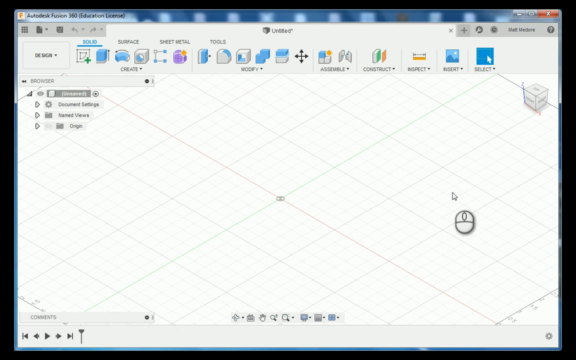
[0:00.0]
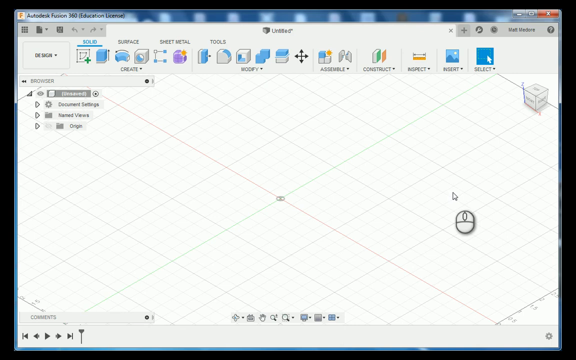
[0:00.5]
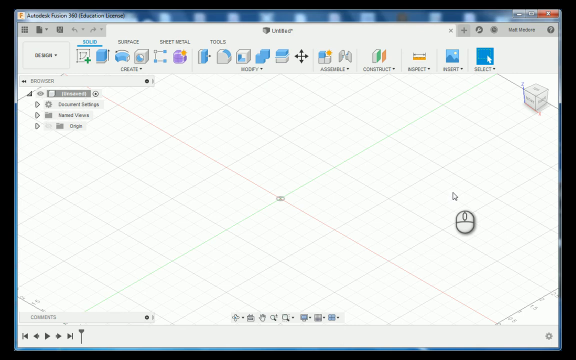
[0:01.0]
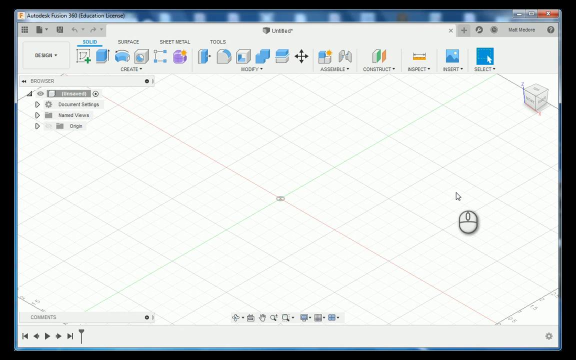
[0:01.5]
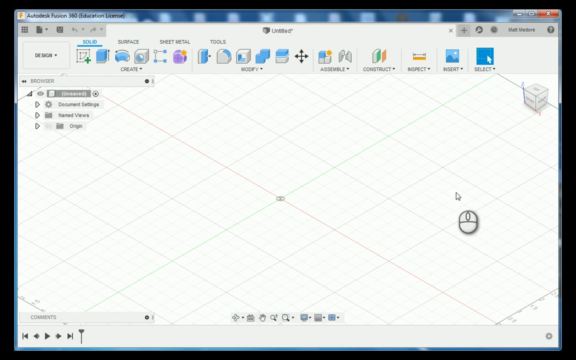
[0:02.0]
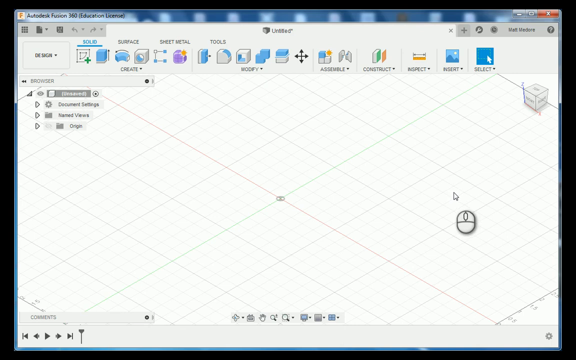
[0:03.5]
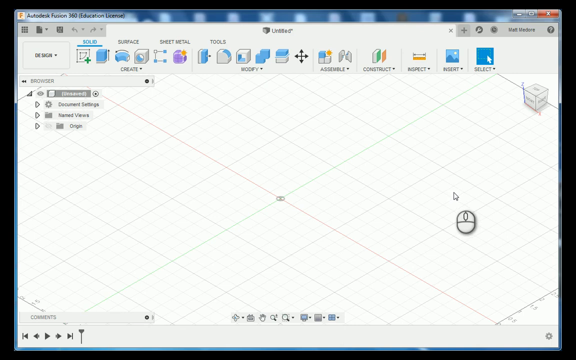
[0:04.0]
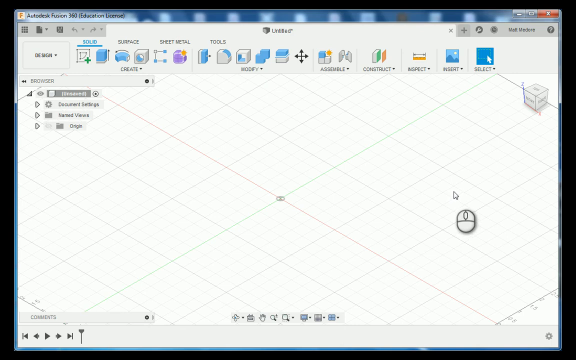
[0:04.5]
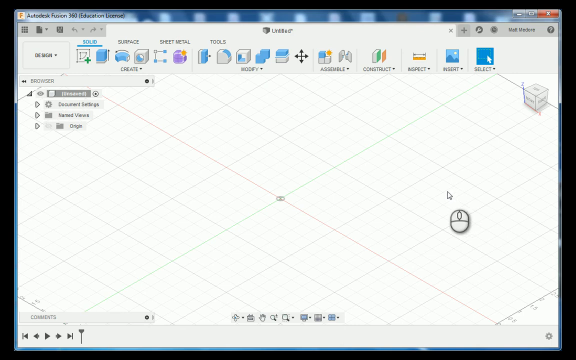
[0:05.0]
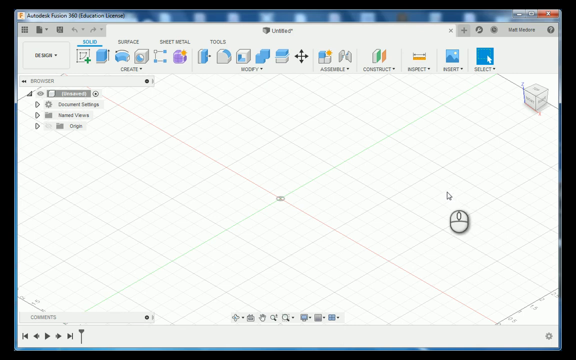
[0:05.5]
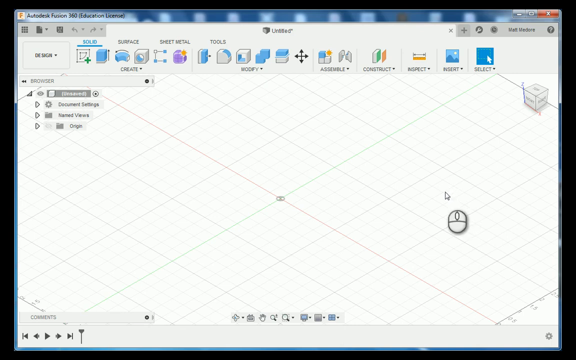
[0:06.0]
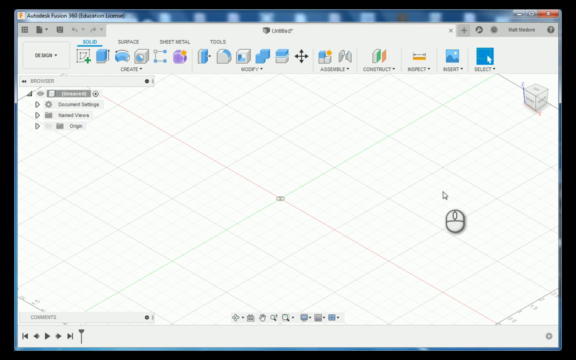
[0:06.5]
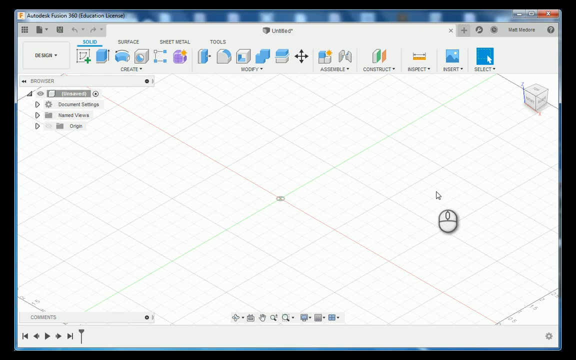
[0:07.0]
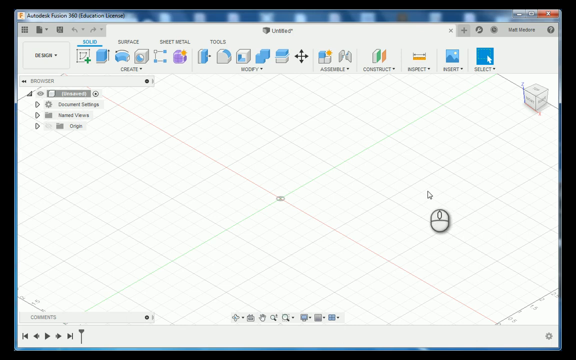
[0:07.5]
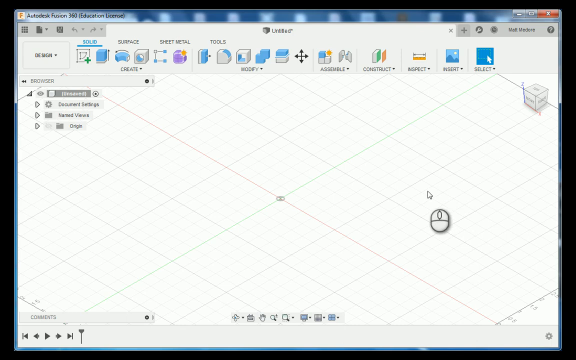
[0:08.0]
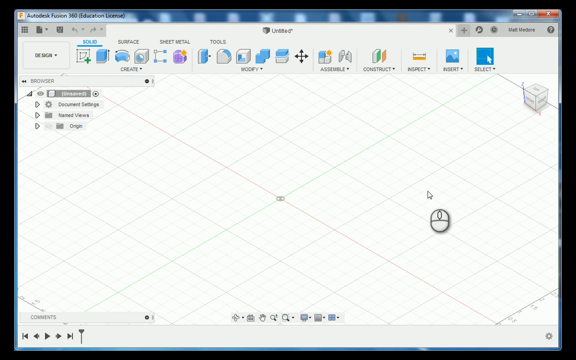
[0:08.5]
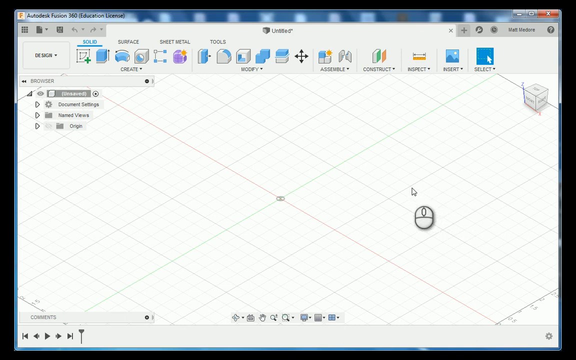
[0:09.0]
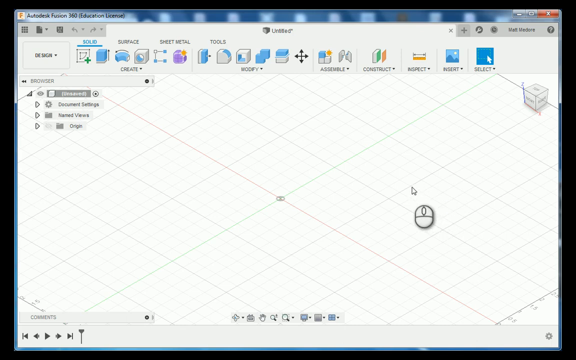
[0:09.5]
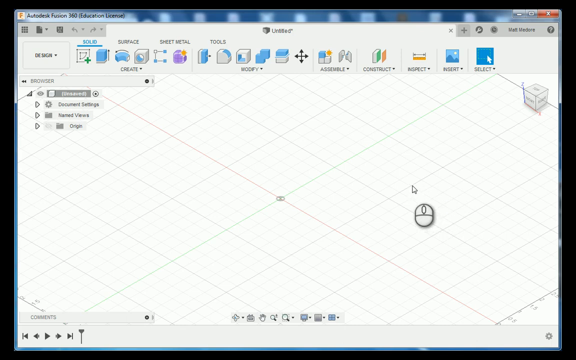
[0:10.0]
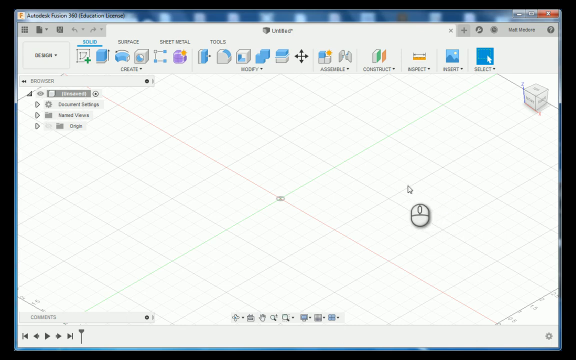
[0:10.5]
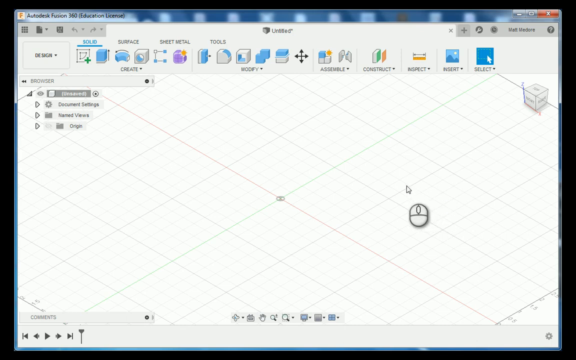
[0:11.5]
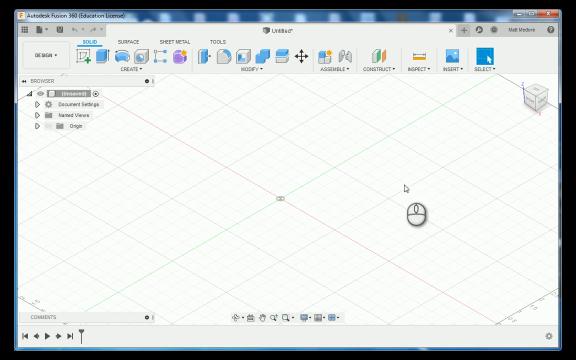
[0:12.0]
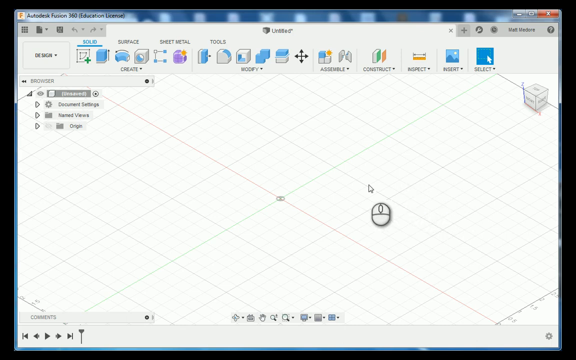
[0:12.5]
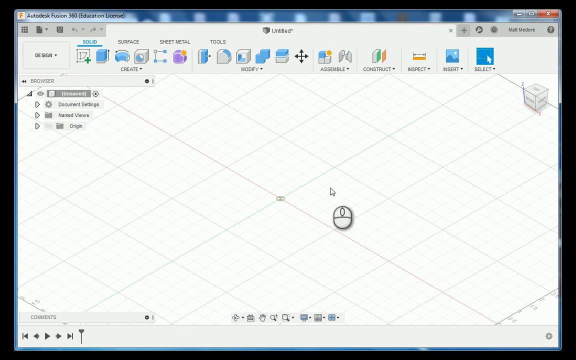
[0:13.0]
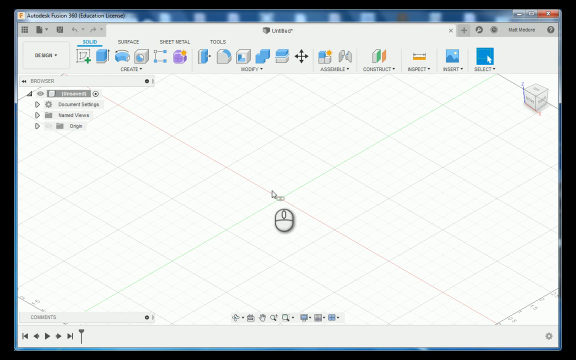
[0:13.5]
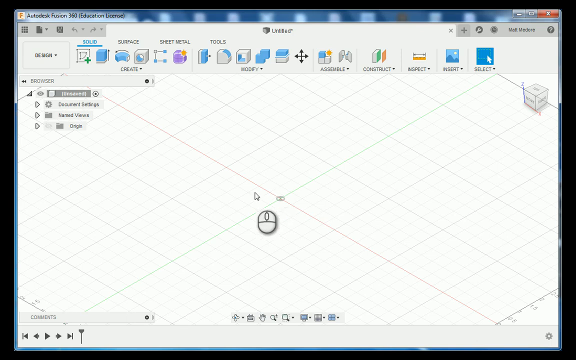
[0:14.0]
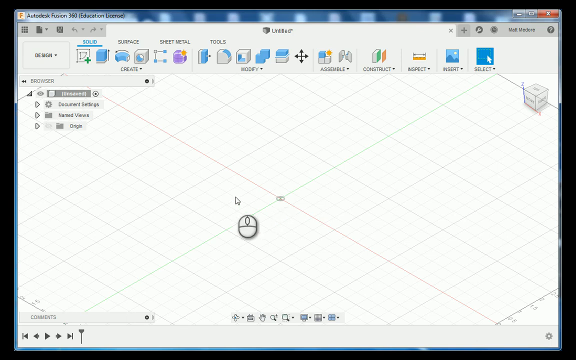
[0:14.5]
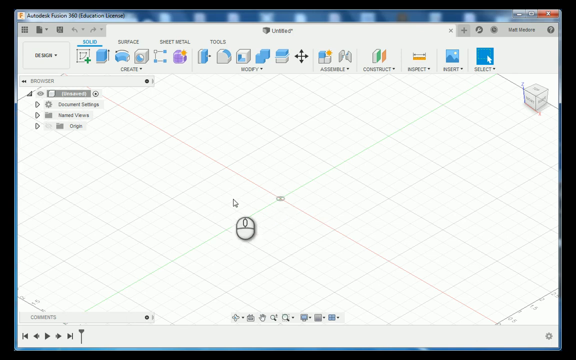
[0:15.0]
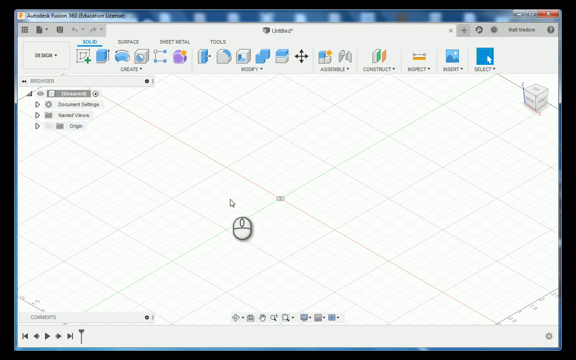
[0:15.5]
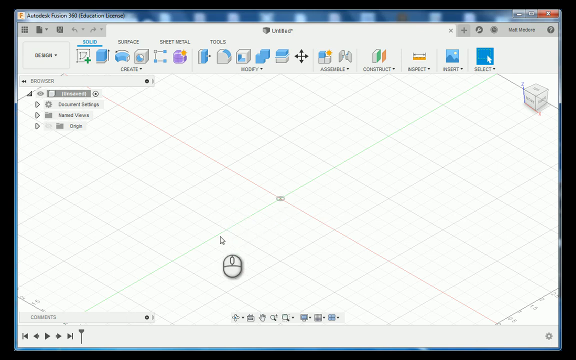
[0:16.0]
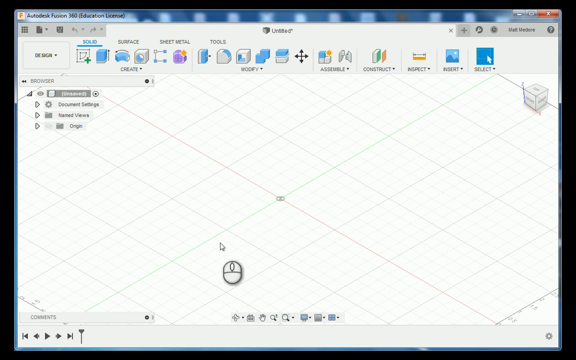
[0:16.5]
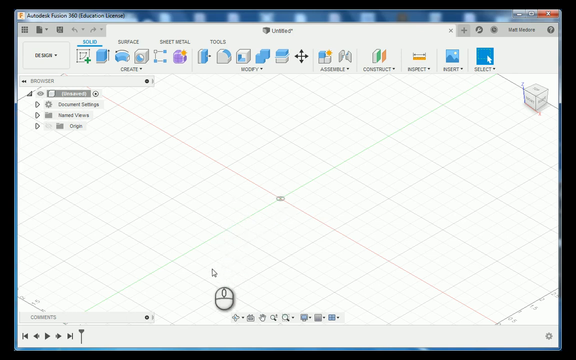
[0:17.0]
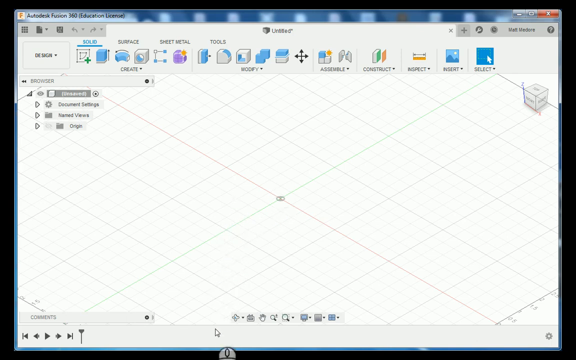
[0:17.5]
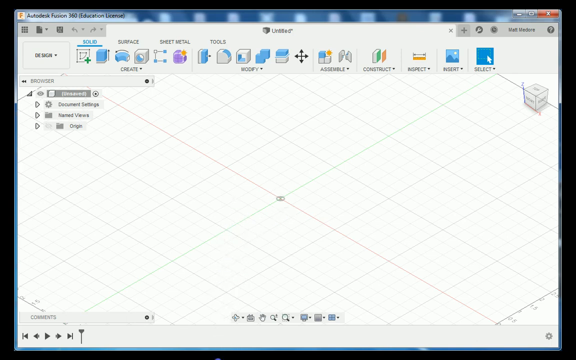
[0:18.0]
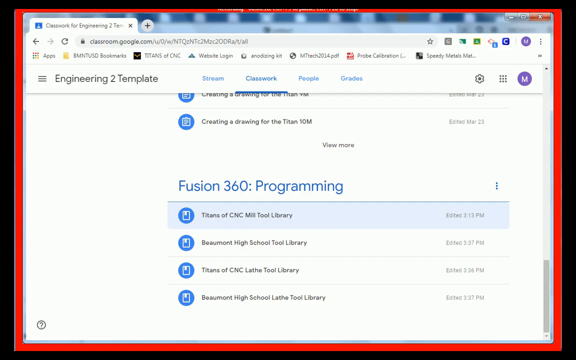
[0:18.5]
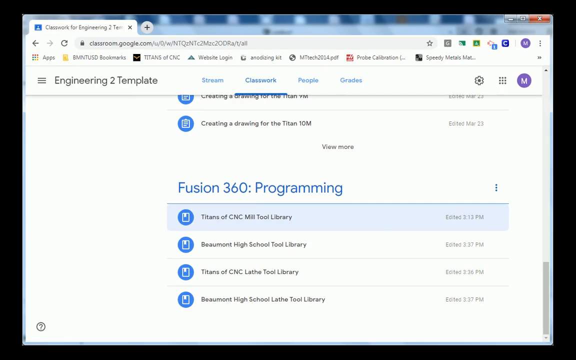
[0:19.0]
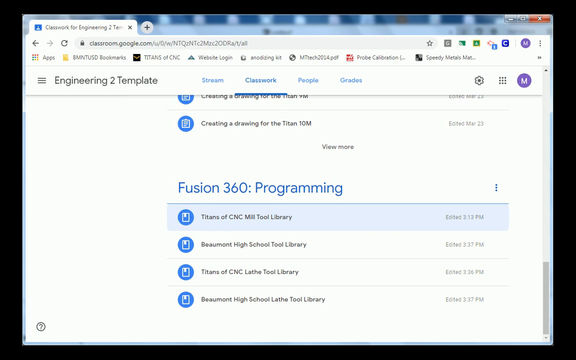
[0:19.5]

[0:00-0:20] A program labeled "Autodesk Fusion 360 Education License" is open: a modeling program with the UI elements along the very top and a grid base on the main part of the screen. On the right side of the screen the mouse cursor moves left and right, slowly drifts left toward the center, then quickly moves to the center before heading left and downward off the bottom of the screen. It clicks on something off-screen, which opens a web browser window labeled "Classwork for Engineering 2". The web page looks to be Google Documents, where multiple kinds of documents can be downloaded; the category in focus is "Fusion 360 Programming".